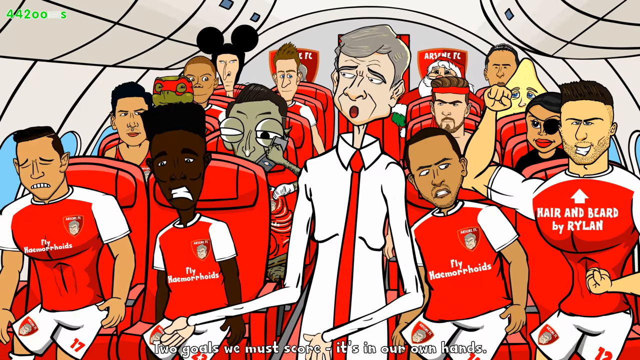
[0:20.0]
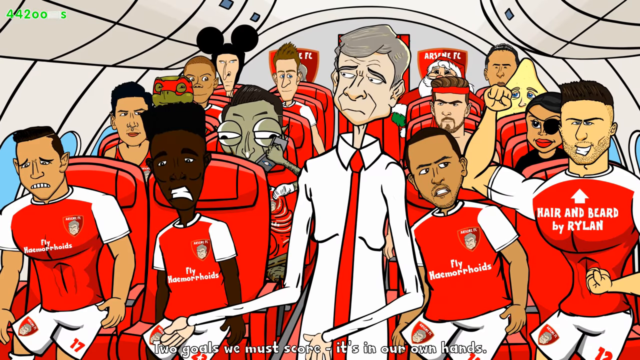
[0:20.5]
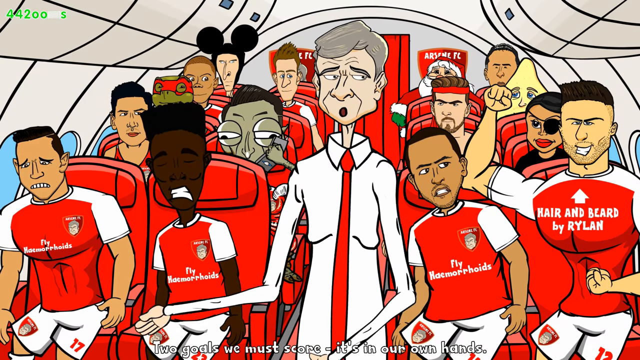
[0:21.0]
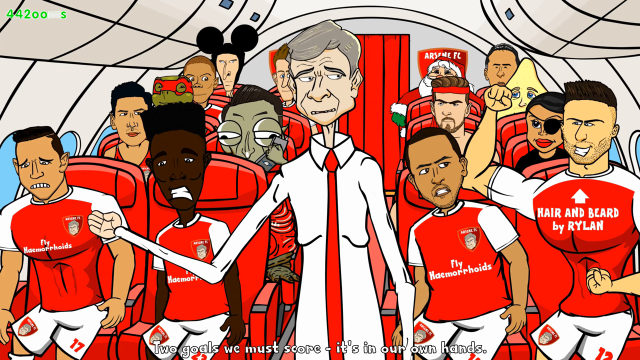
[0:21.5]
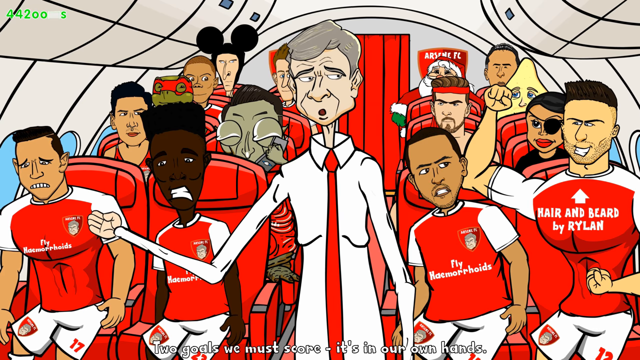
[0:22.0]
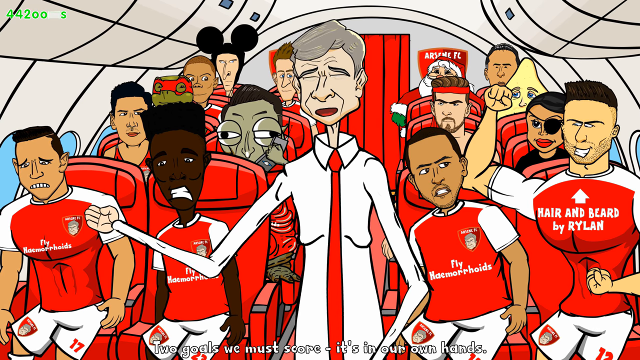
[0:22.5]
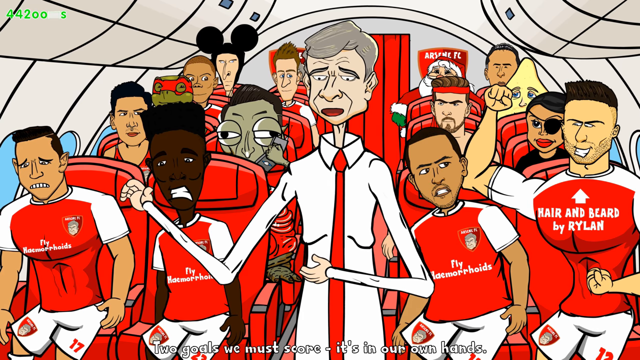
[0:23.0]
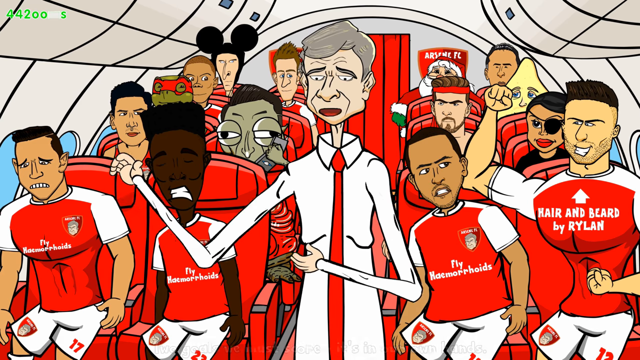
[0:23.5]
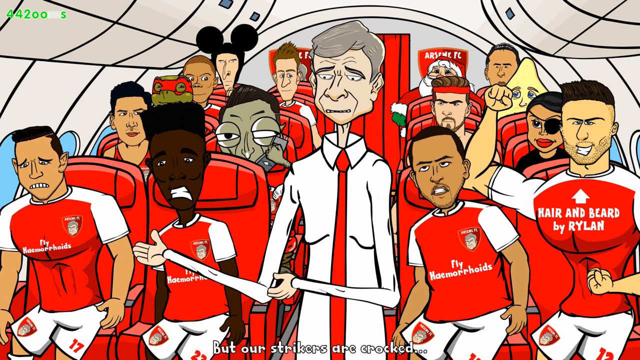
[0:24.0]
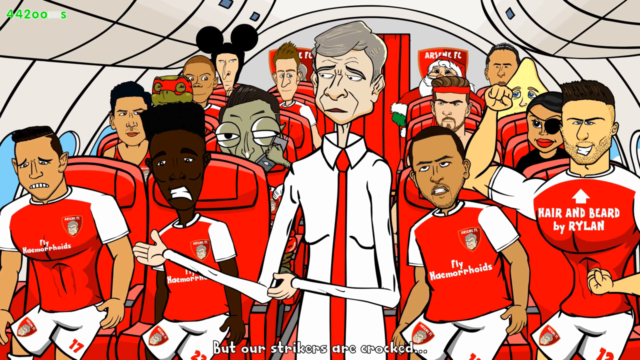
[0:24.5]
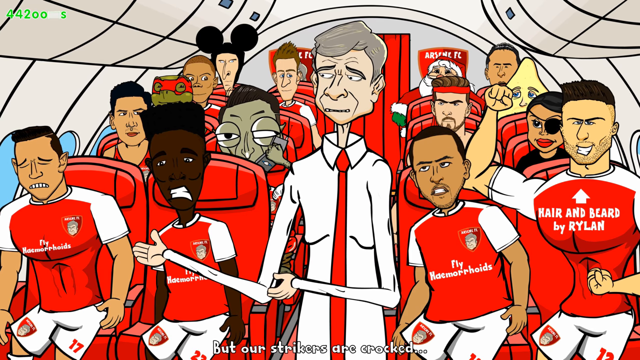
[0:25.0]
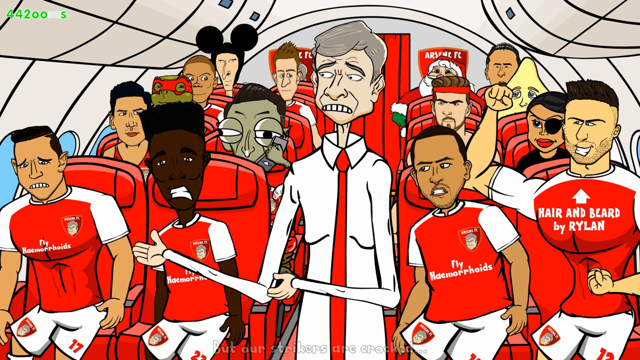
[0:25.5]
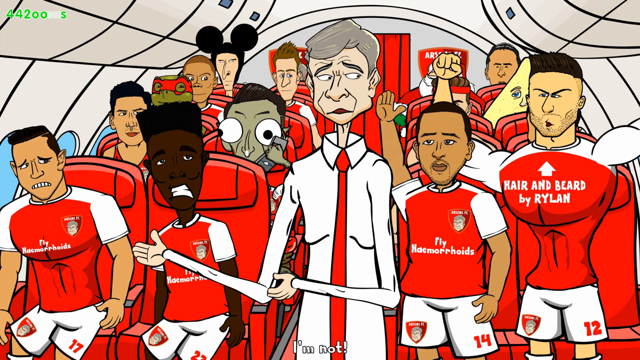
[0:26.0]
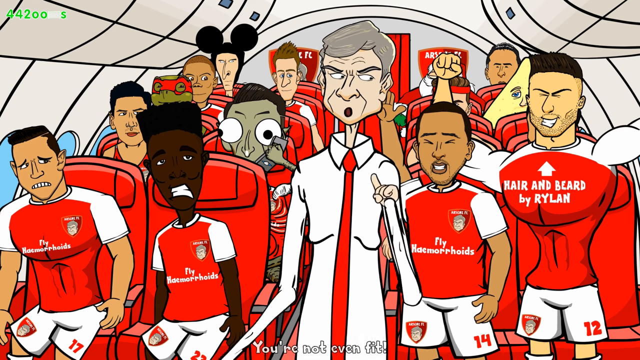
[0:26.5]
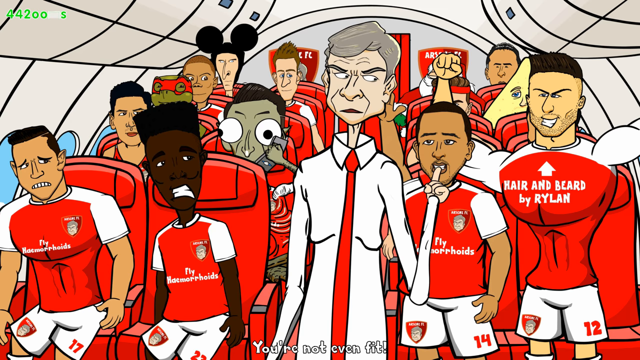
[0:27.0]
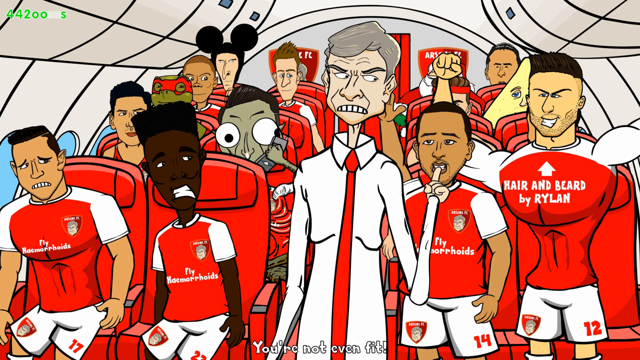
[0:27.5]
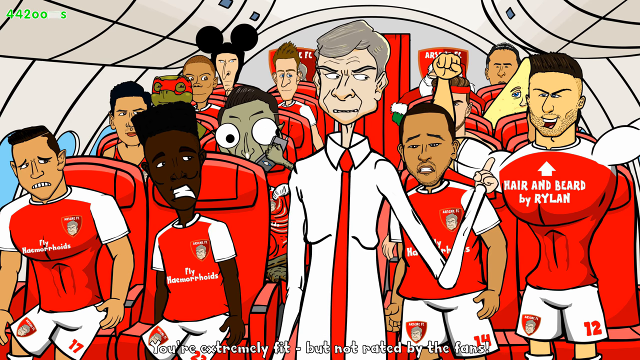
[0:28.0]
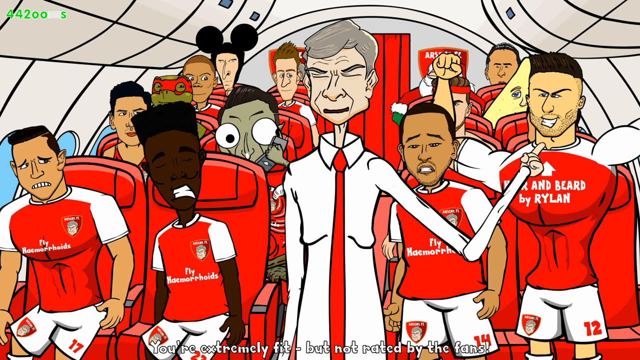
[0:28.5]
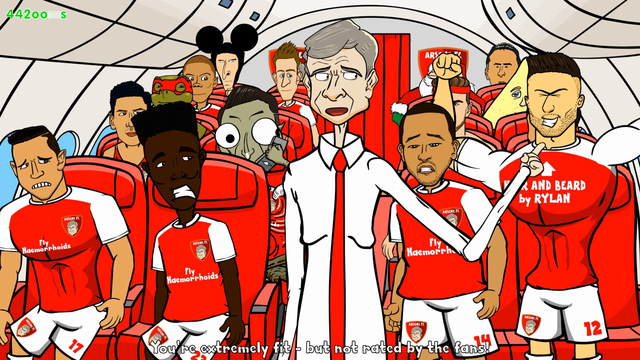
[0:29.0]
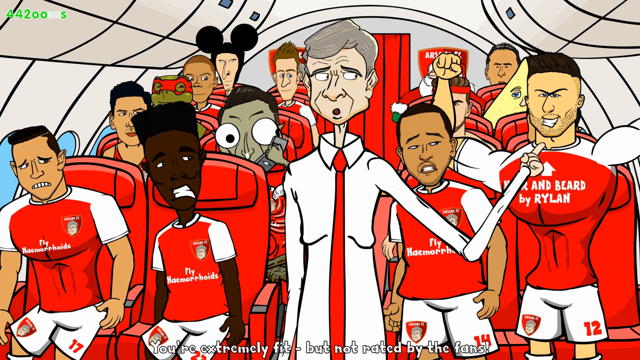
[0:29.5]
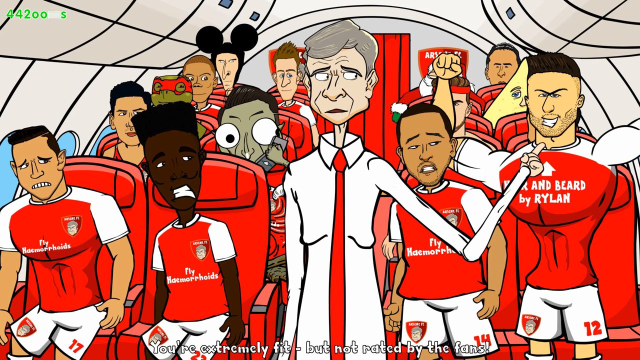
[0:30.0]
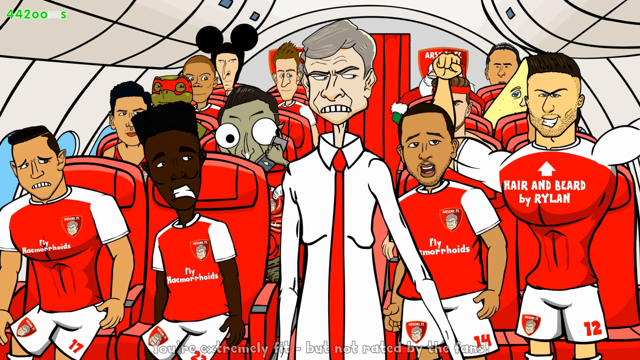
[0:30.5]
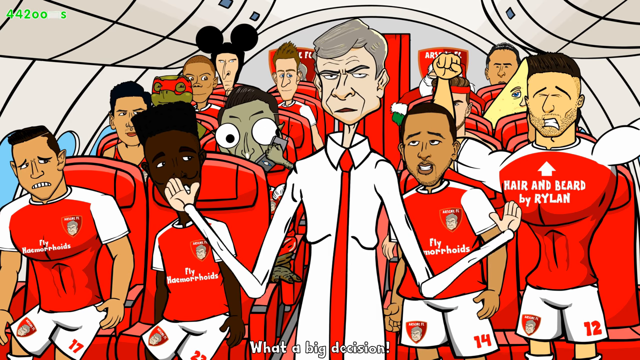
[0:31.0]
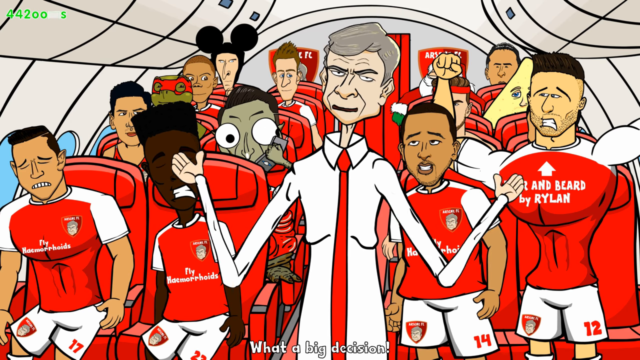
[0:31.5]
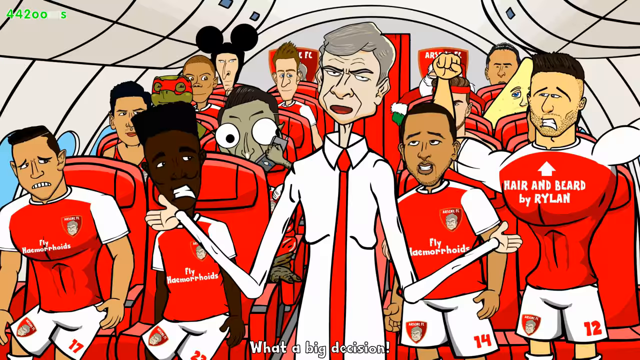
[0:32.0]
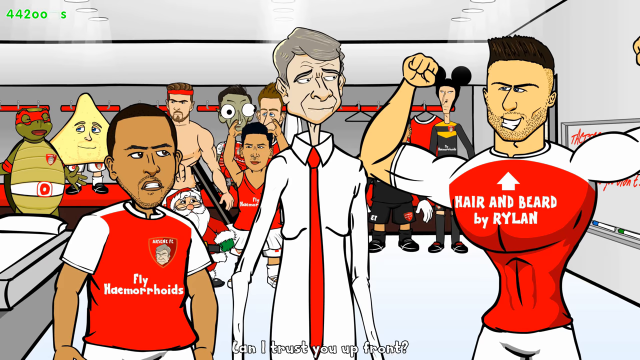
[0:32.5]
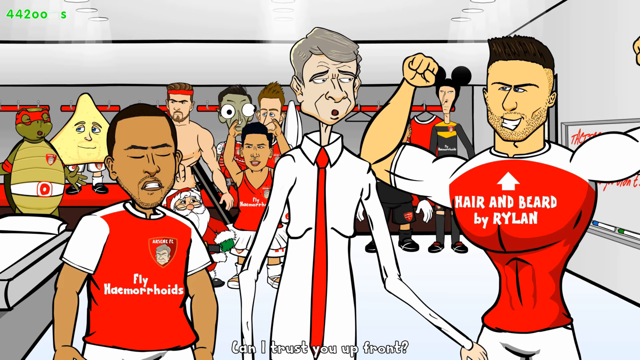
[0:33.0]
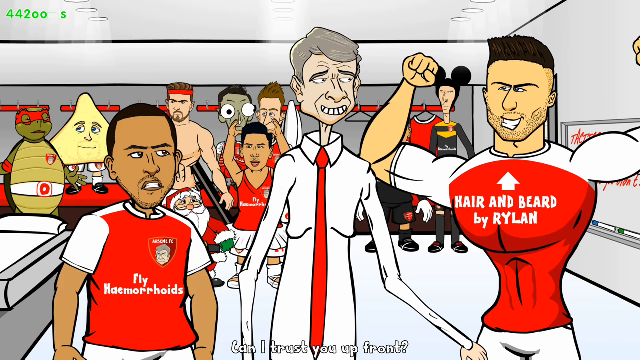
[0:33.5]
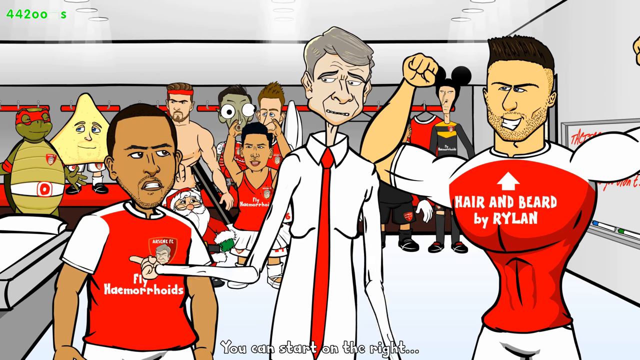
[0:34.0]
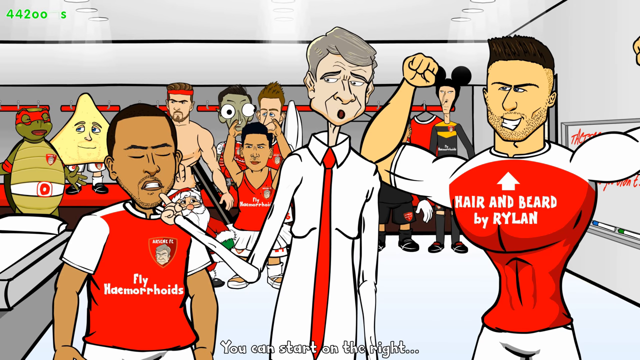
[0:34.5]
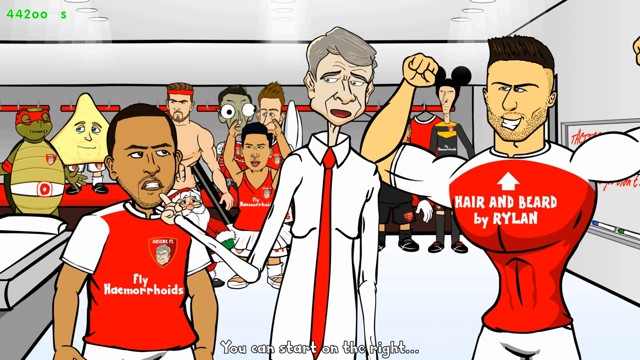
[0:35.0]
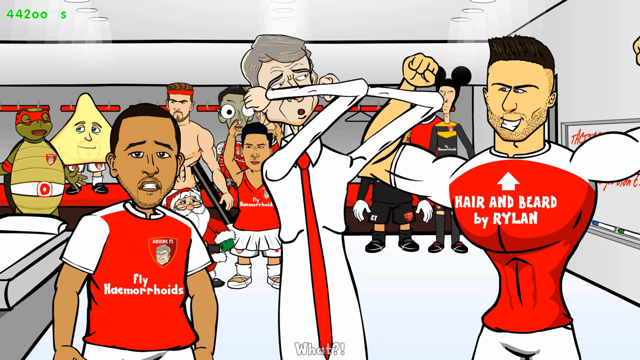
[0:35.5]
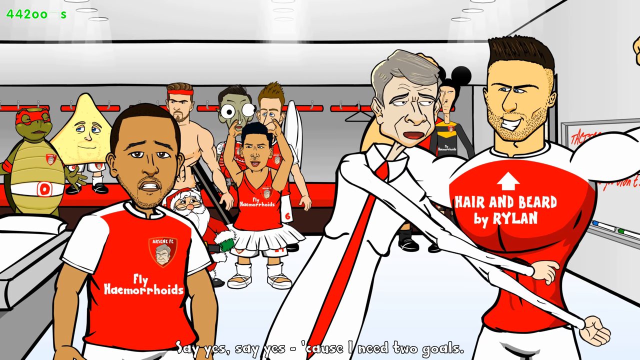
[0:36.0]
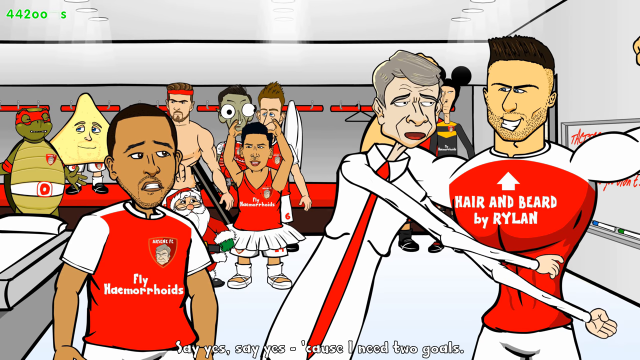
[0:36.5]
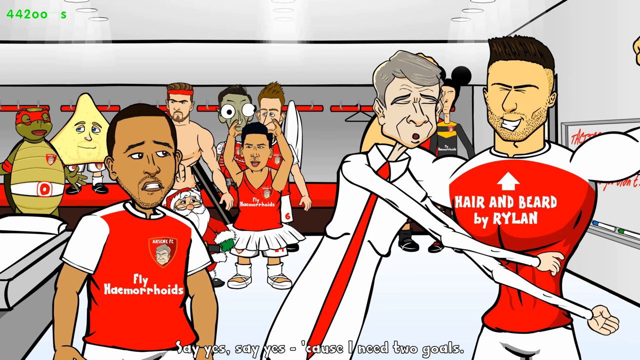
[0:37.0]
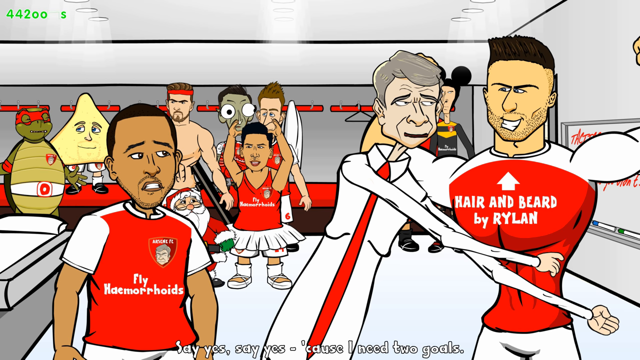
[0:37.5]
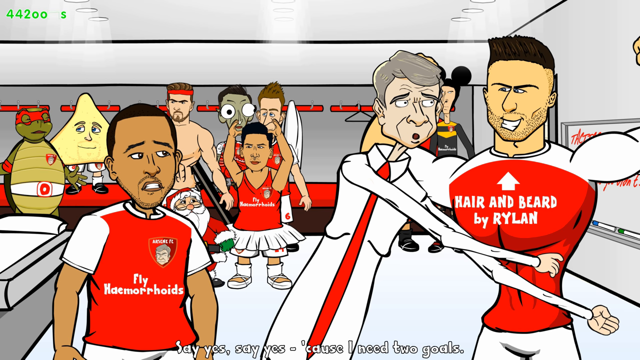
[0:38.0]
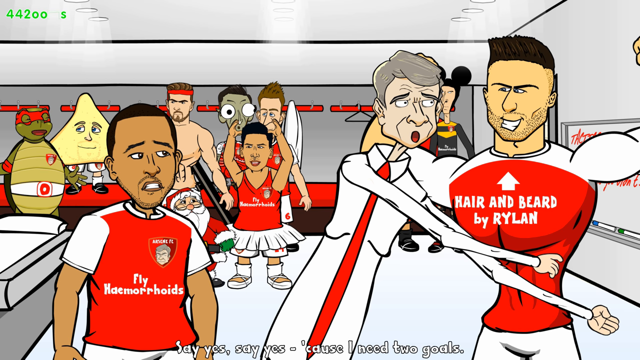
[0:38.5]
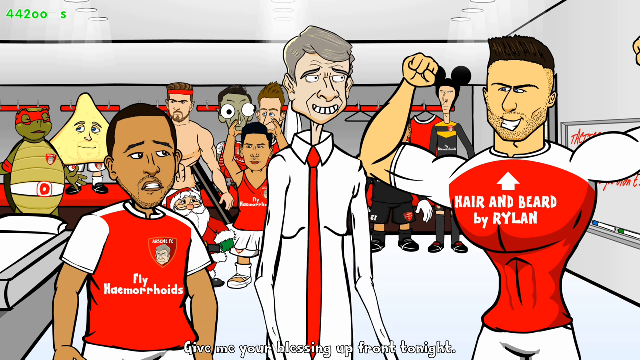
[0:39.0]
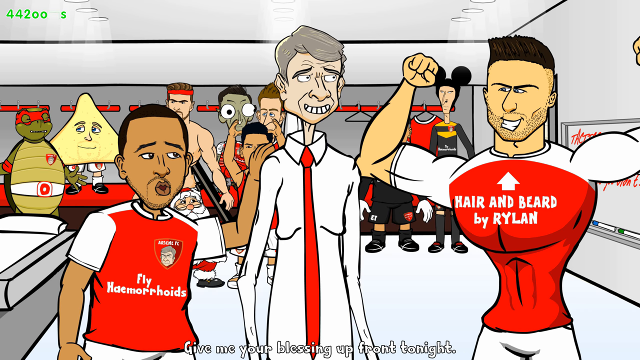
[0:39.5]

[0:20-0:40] As the soccer team is about to set off for the match, the players come into clear view. On the very right is a handsome fellow in a red t-shirt with the words "hair and beard by Ryland." The other players wear red t-shirts that each say "fly hemorrhoids." Among them are Spanish-looking fellows, a black fellow, an alien-looking fellow, a mutant ninja turtle fellow, a fellow in the rear wearing Mickey Mouse ears, and a character who looks like a lemon. The coach stands at the front of the plane, not facing the players but facing the camera with his mouth wide open, talking and lecturing while using his long, skinny arms for emphasis. He points to the handsome, tall fellow on the right, who is bigger and stronger than the others and apparently the lead player and lead scorer.